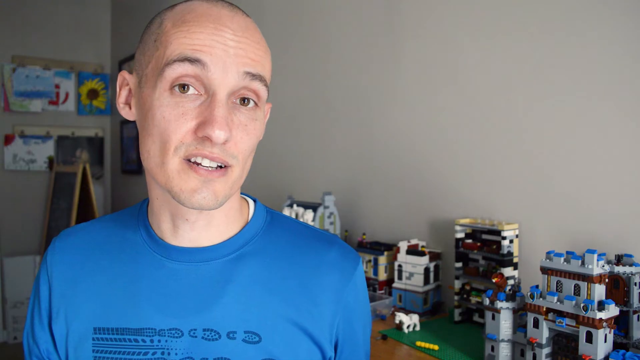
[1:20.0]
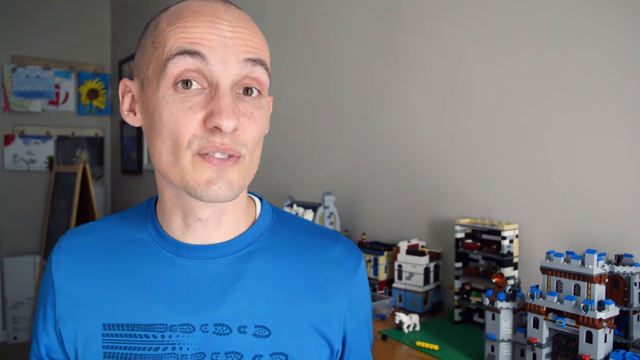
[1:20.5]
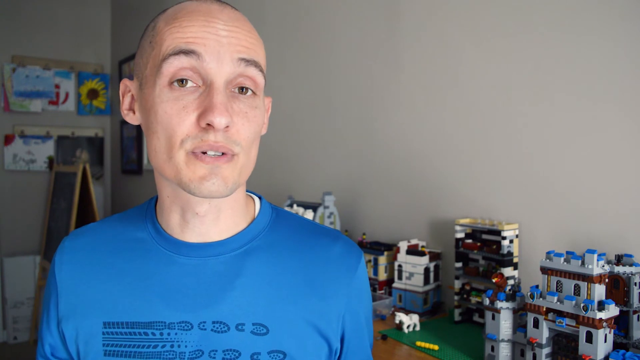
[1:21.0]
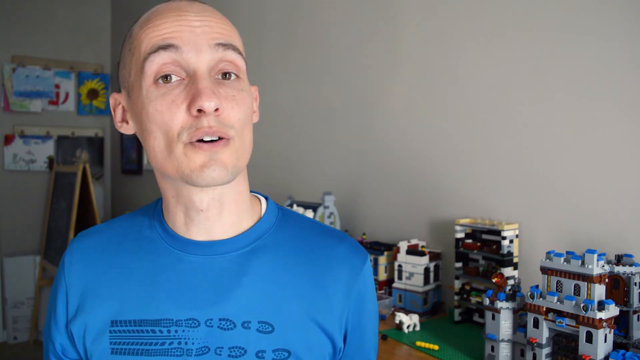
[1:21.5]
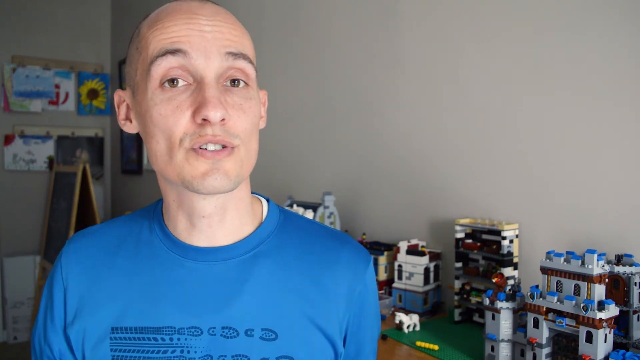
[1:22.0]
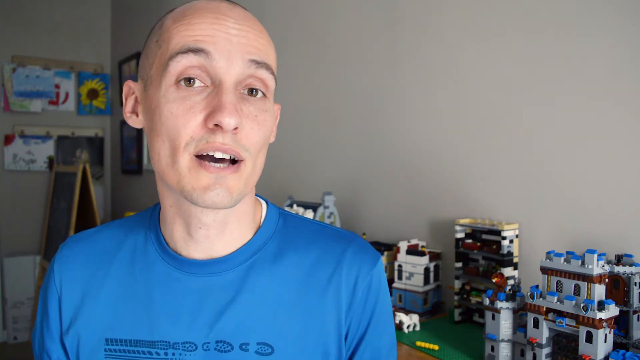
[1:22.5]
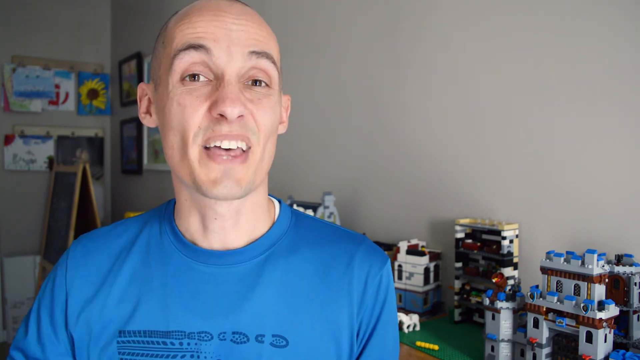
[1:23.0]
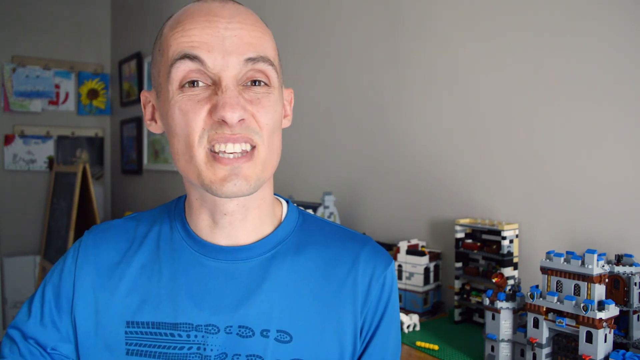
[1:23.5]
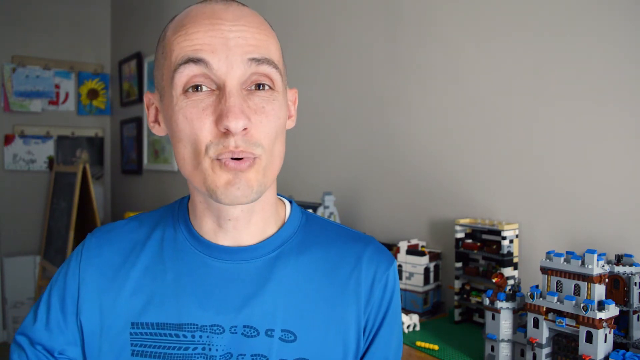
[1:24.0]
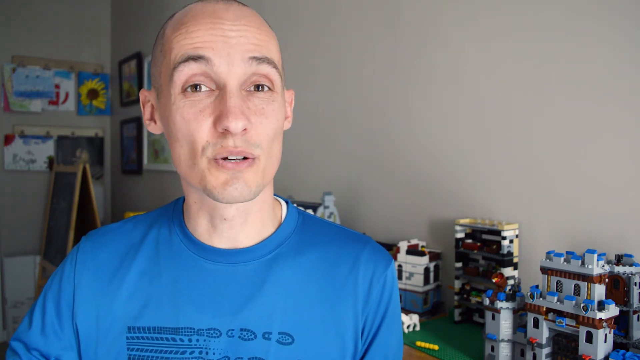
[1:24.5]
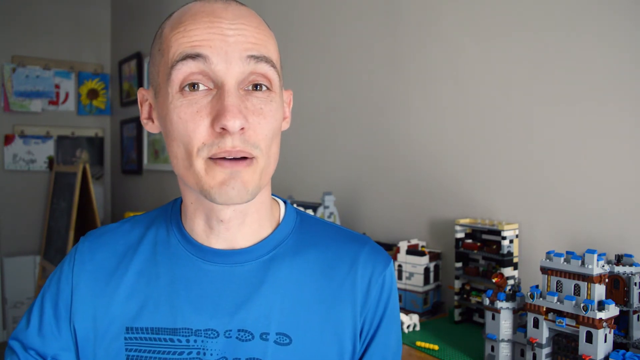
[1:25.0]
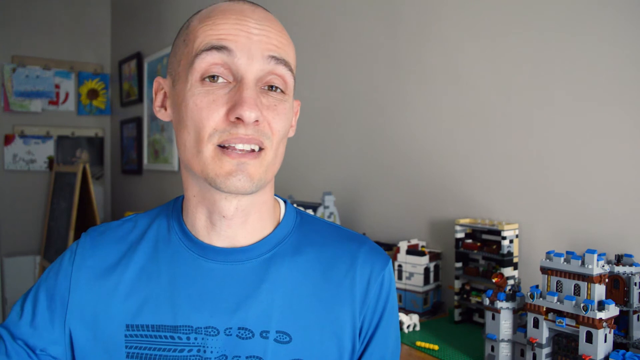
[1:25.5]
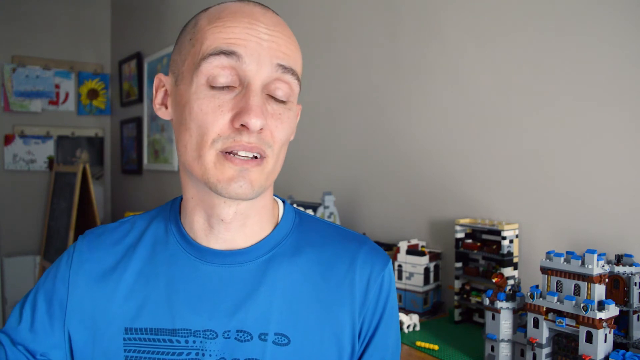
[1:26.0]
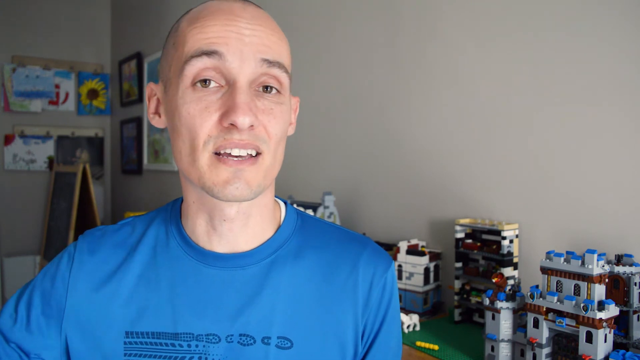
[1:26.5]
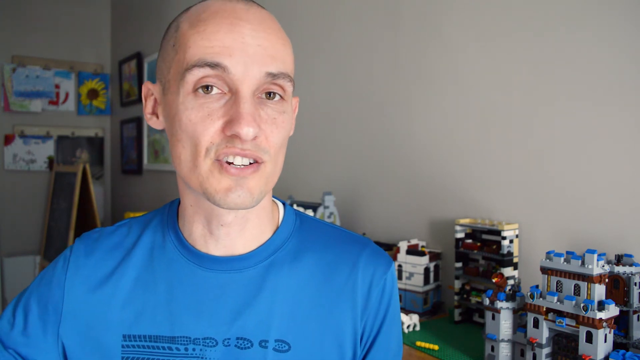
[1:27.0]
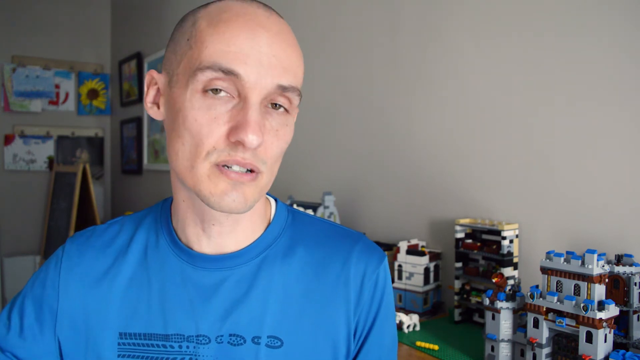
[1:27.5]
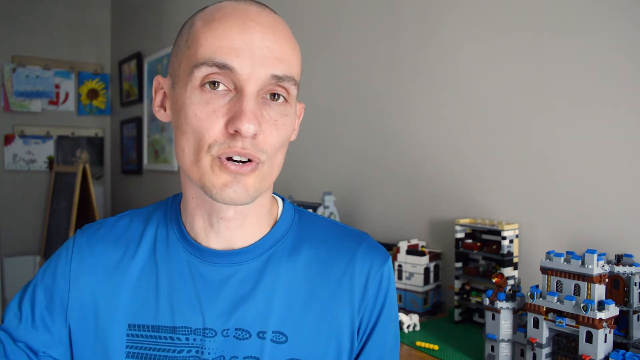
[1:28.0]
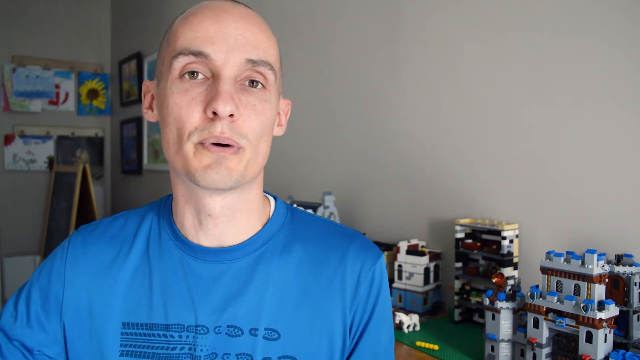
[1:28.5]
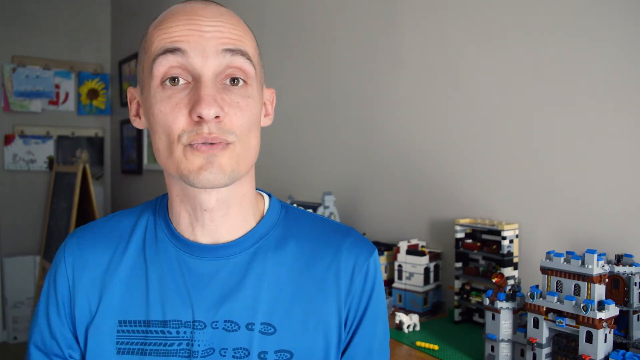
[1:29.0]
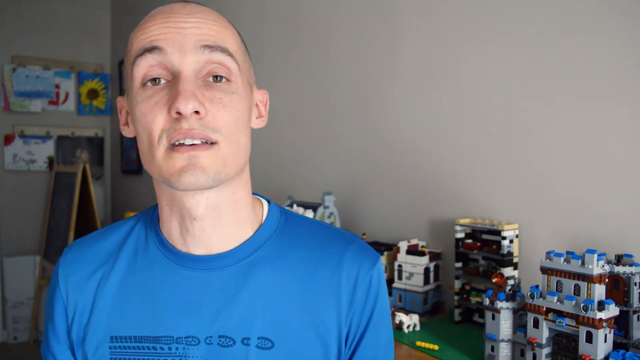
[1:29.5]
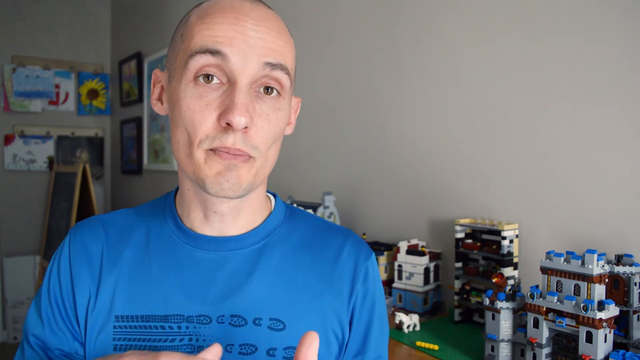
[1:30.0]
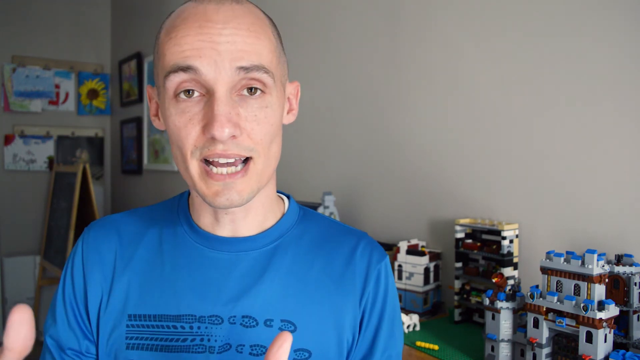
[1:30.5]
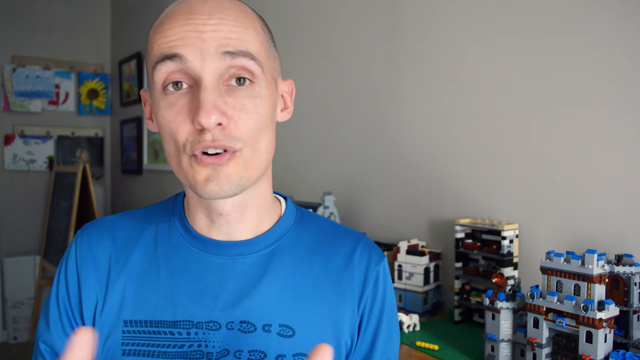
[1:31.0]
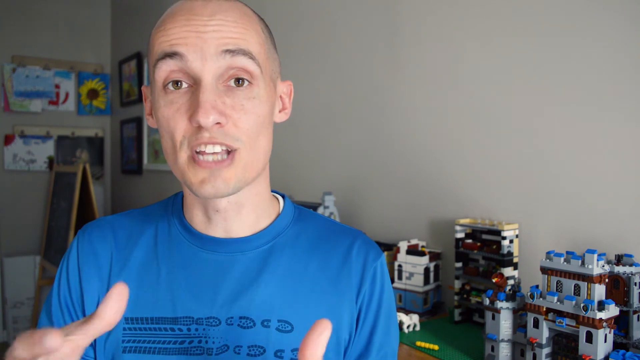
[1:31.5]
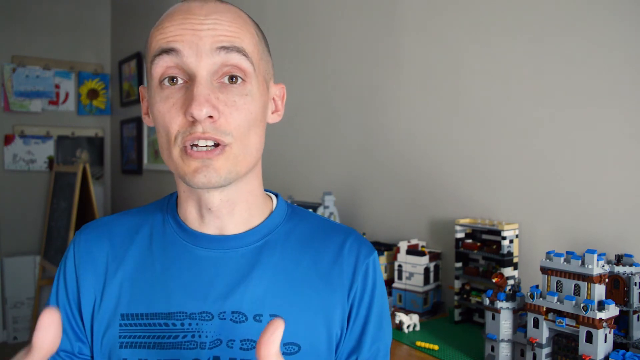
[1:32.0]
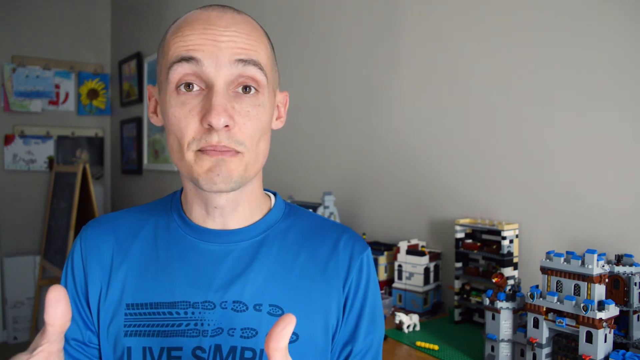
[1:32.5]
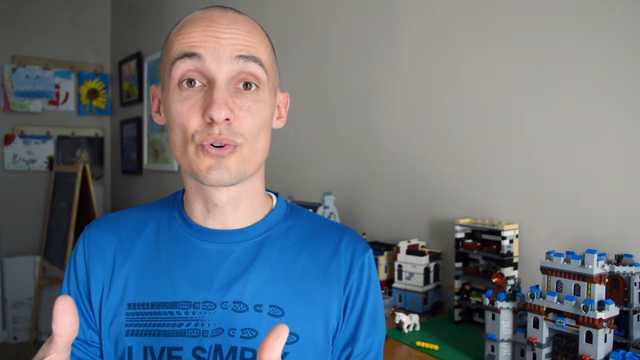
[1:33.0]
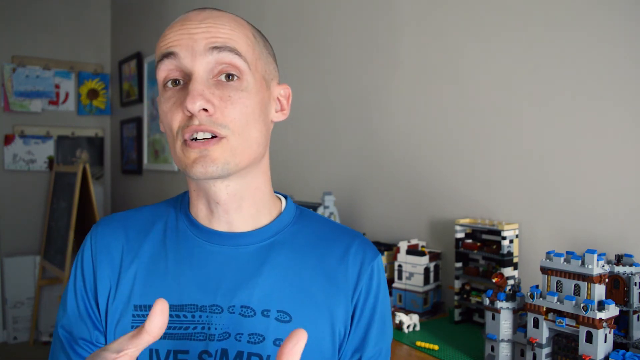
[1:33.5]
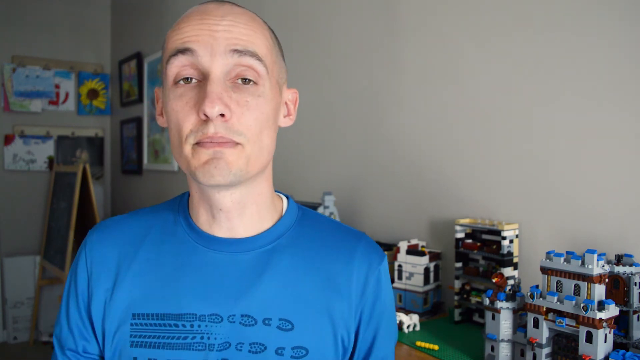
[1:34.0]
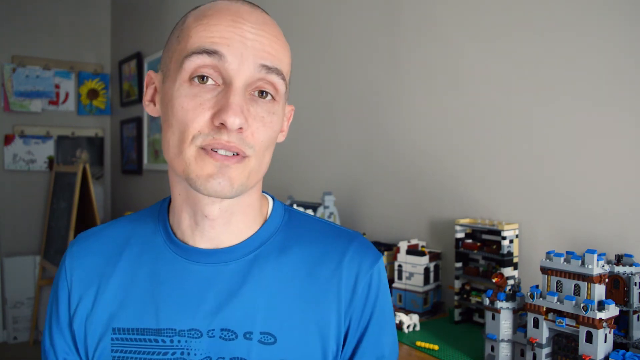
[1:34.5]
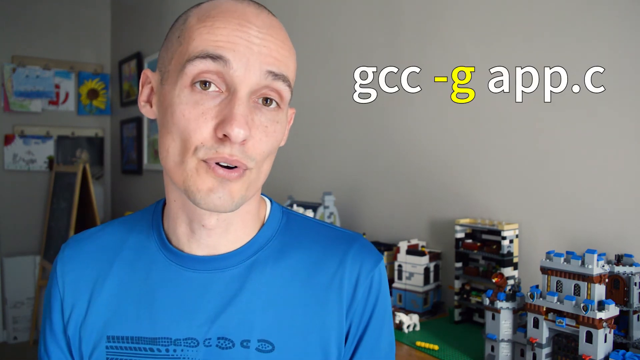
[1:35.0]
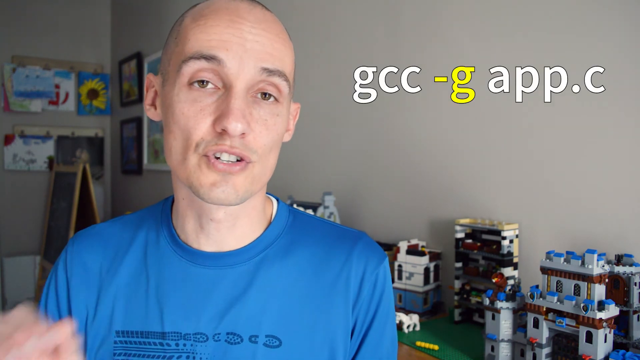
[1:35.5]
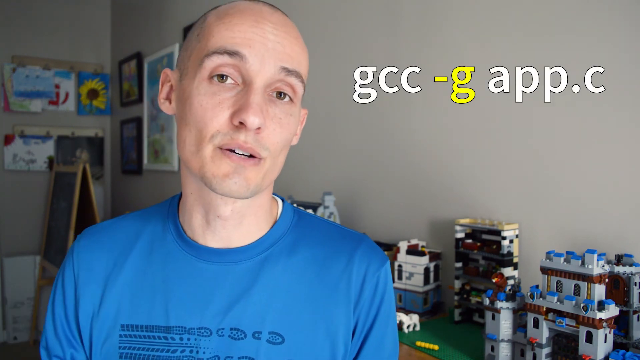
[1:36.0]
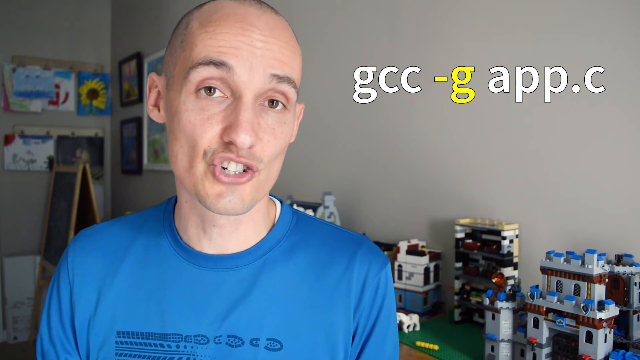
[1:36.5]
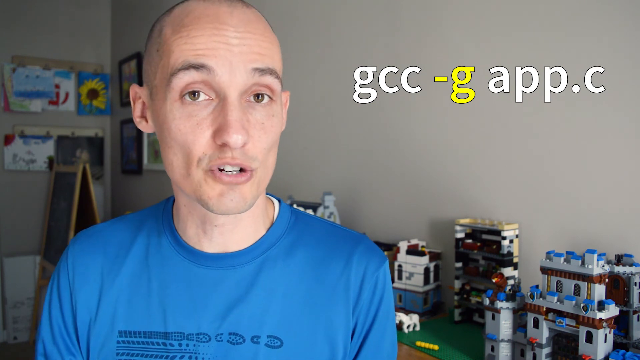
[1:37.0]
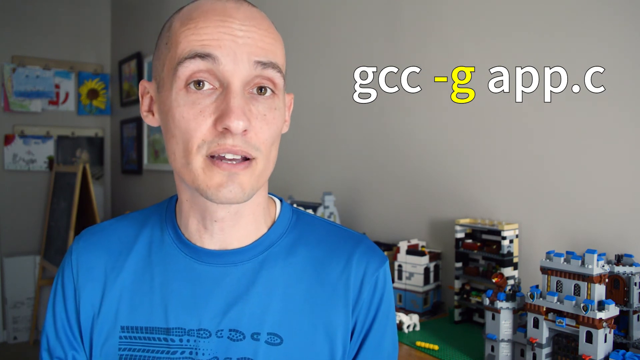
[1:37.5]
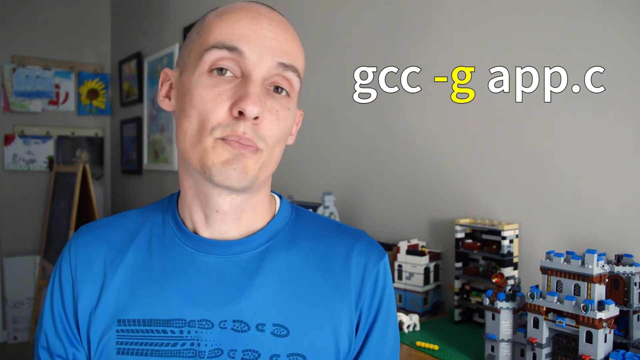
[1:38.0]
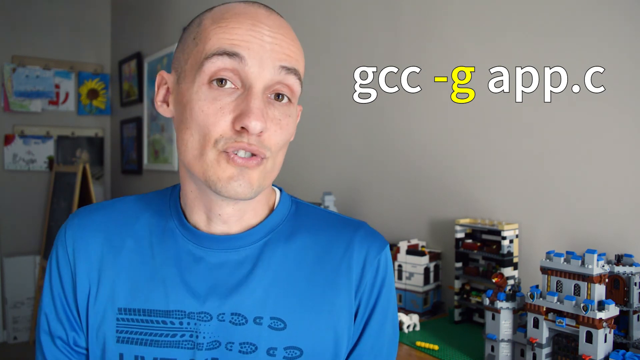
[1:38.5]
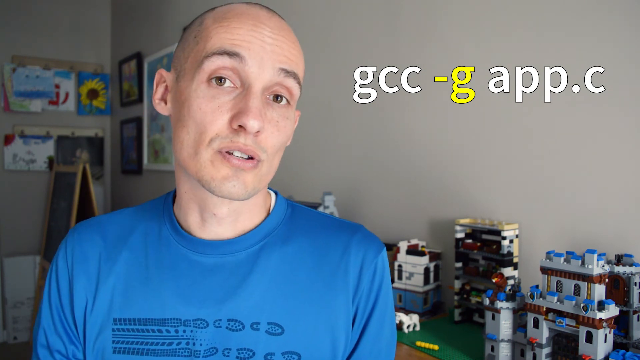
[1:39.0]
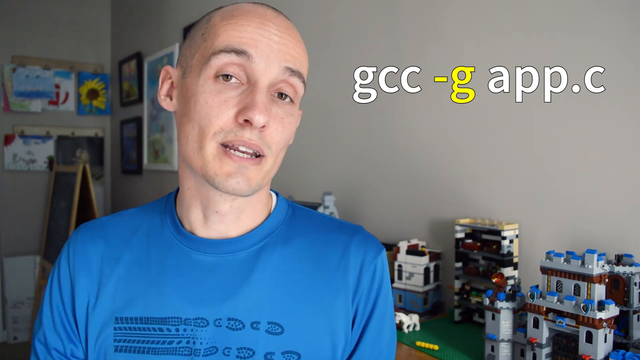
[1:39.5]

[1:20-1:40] The man in the blue shirt continues explaining. Pictures still hang on the wall in the background, and the Legos forming house-like structures can be seen on the table. Text appears on the right side of the screen reading "gcc -g app.c", with "gcc -g" in a different colour, green, and the rest in grey or white; he is explaining this text. For the first time, the man's hands can be seen as he explains. His expression seems to suggest he is reiterating a point.